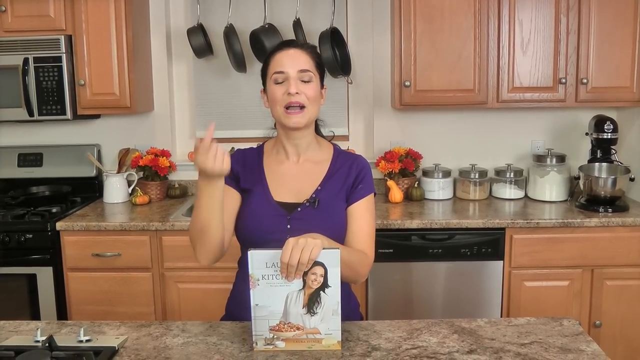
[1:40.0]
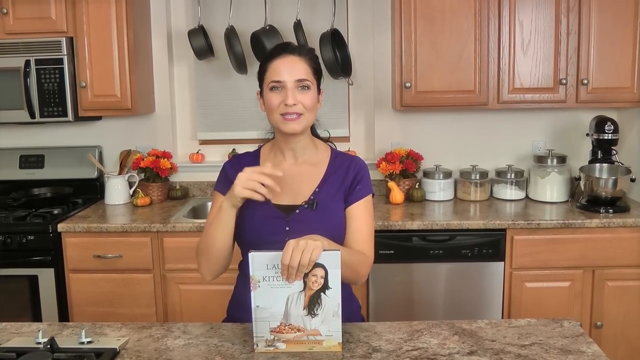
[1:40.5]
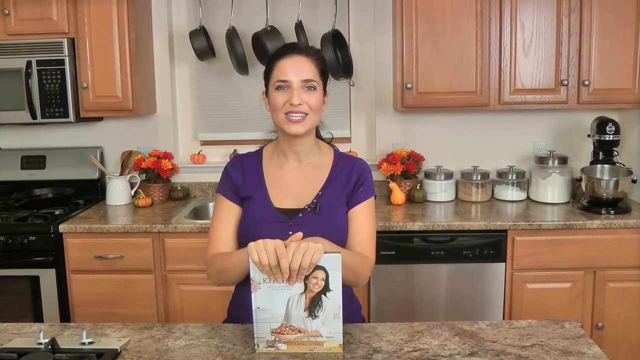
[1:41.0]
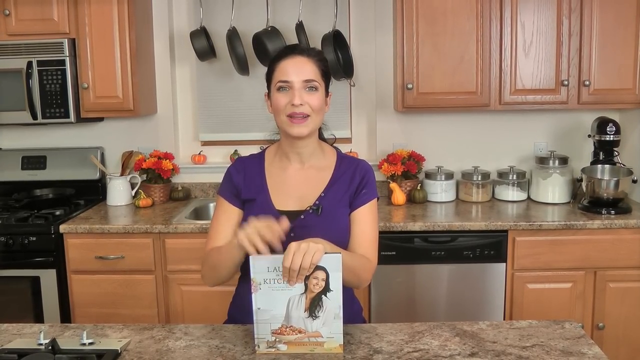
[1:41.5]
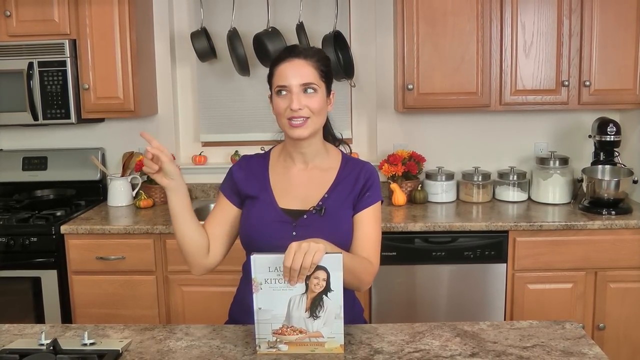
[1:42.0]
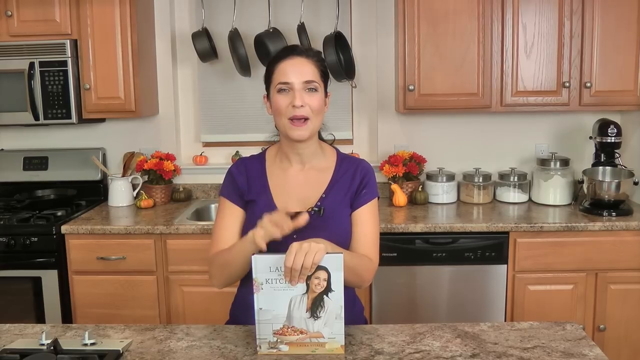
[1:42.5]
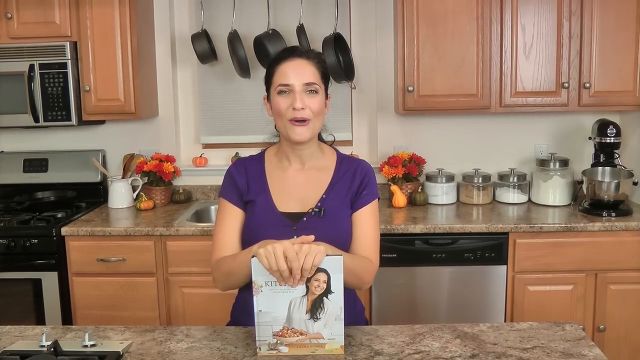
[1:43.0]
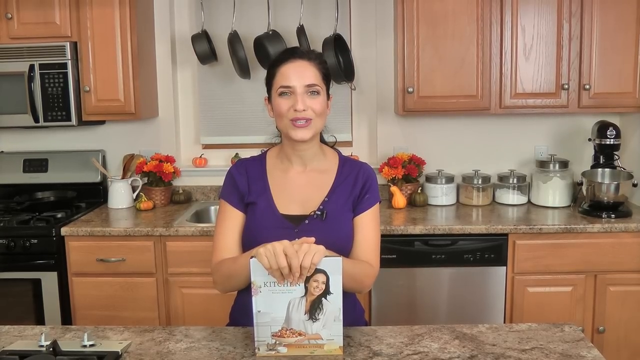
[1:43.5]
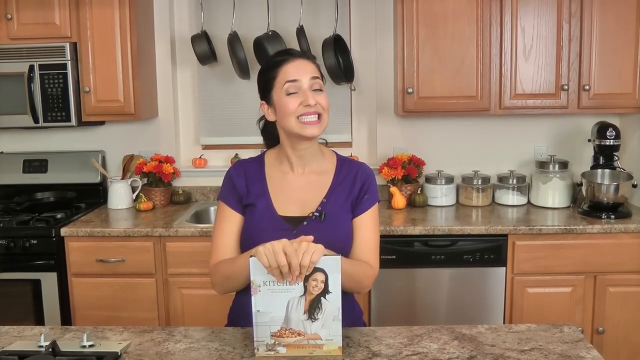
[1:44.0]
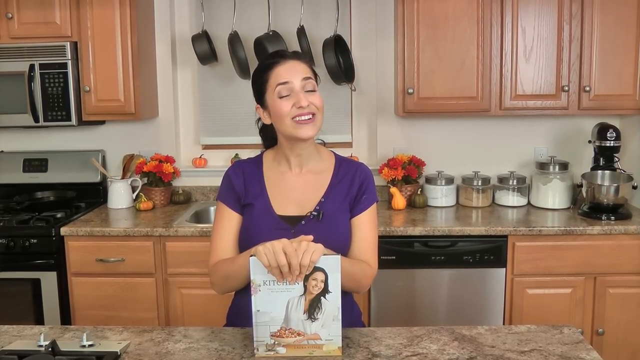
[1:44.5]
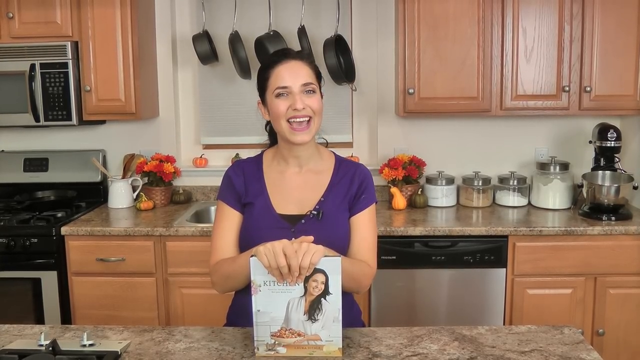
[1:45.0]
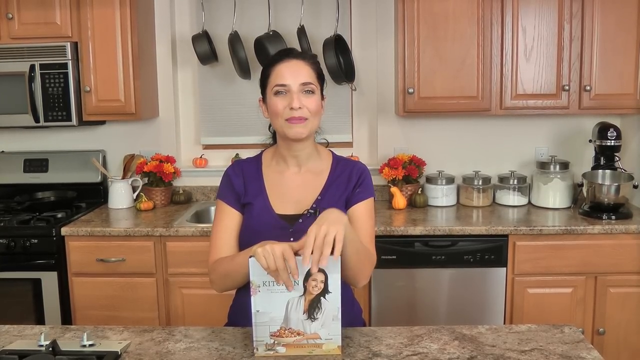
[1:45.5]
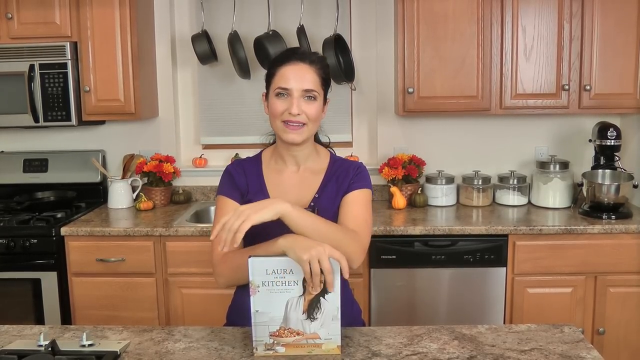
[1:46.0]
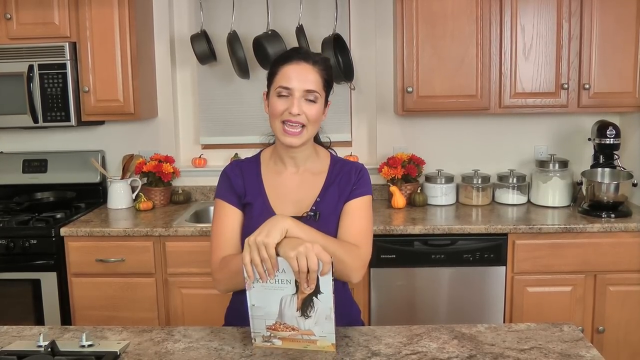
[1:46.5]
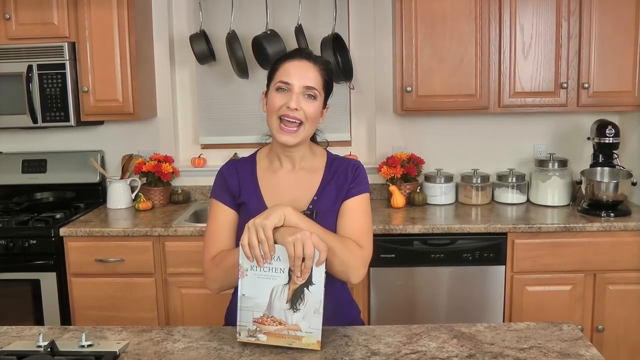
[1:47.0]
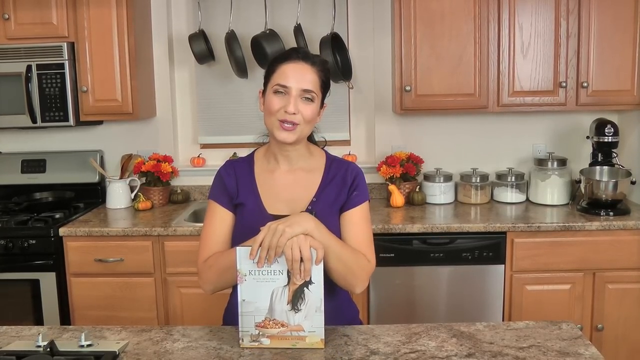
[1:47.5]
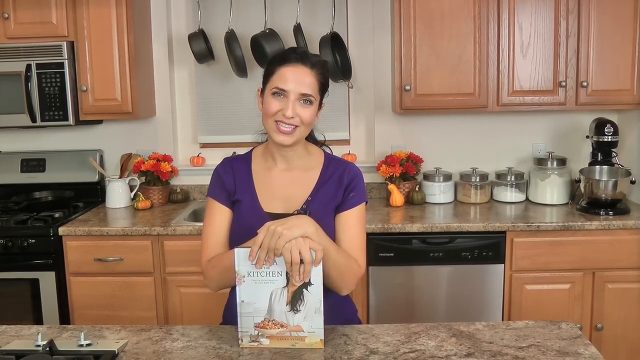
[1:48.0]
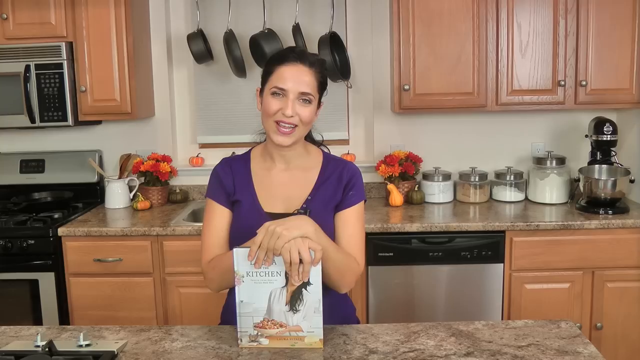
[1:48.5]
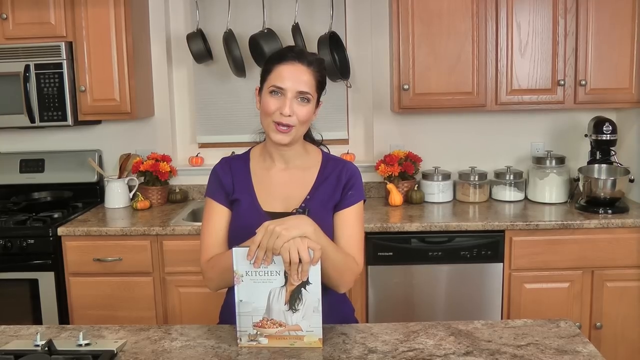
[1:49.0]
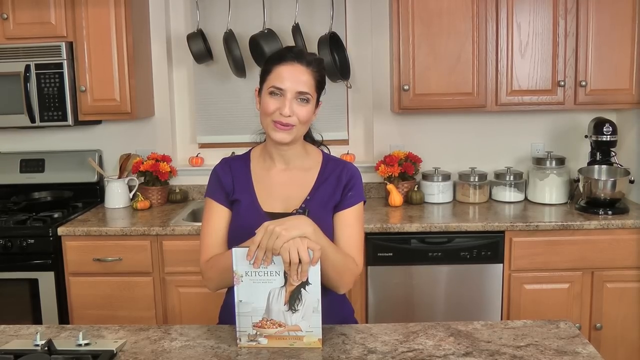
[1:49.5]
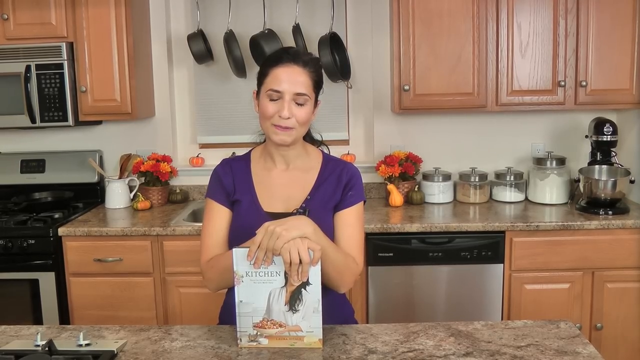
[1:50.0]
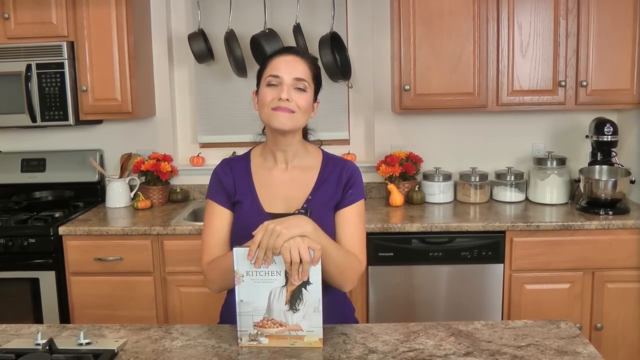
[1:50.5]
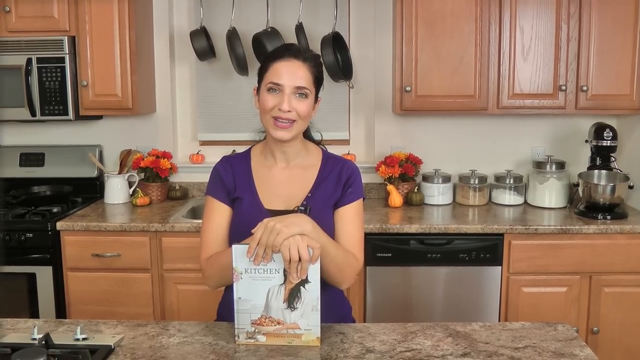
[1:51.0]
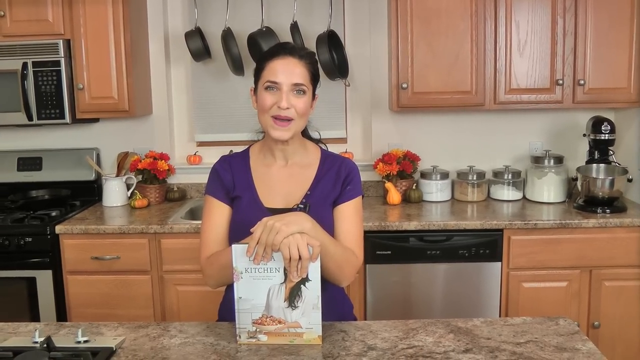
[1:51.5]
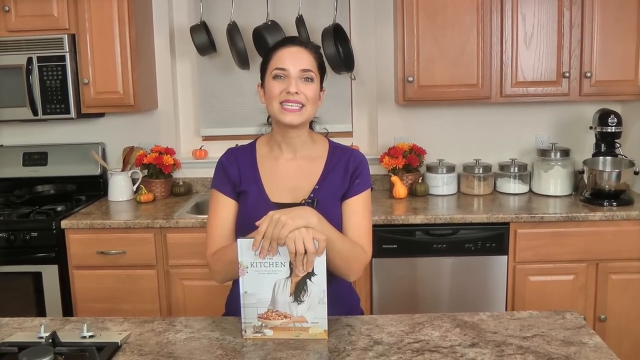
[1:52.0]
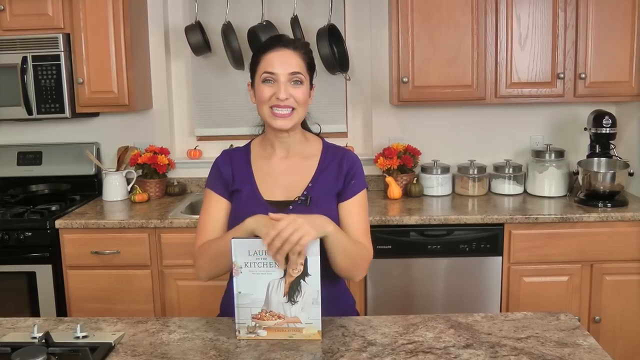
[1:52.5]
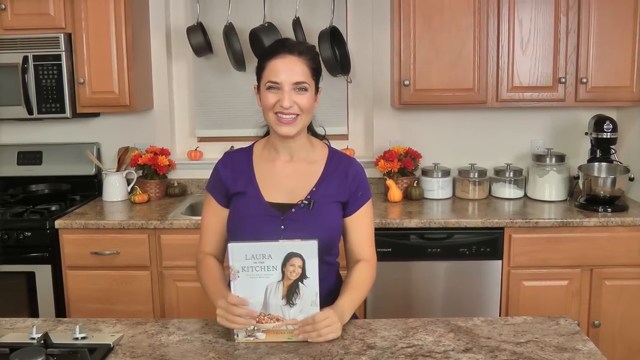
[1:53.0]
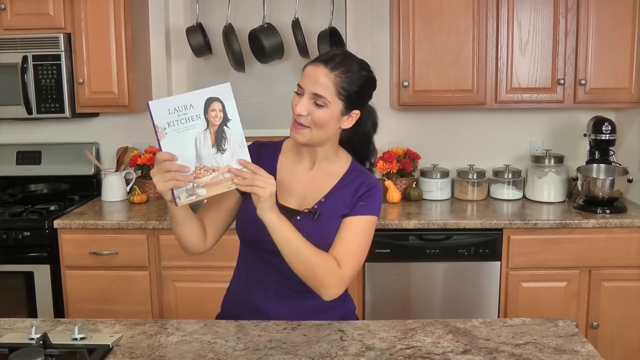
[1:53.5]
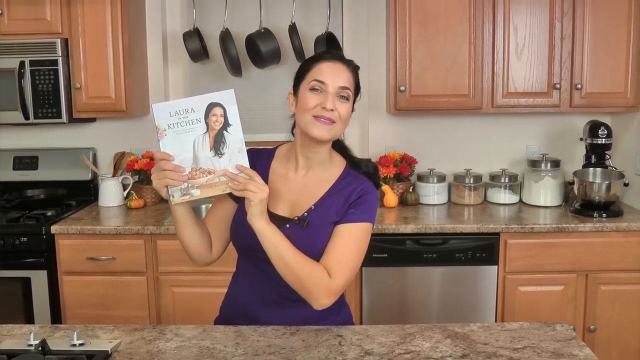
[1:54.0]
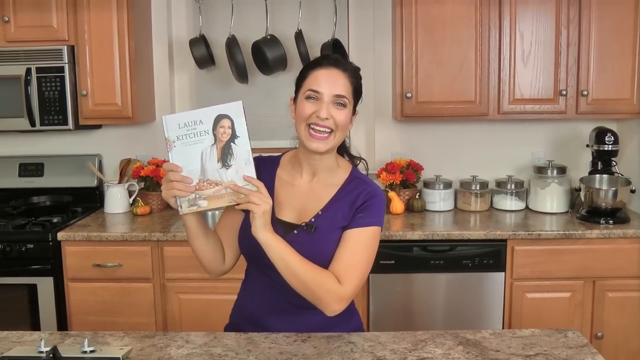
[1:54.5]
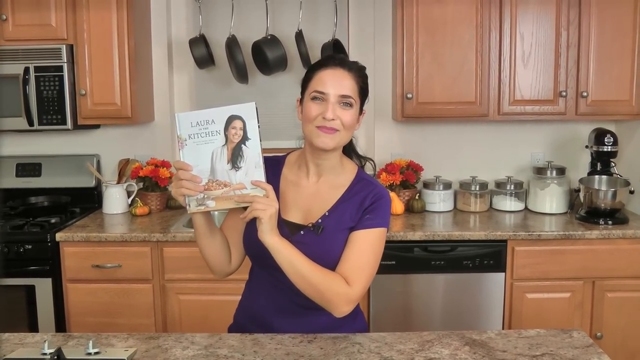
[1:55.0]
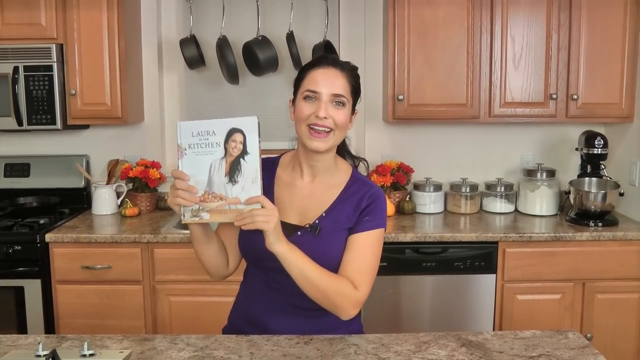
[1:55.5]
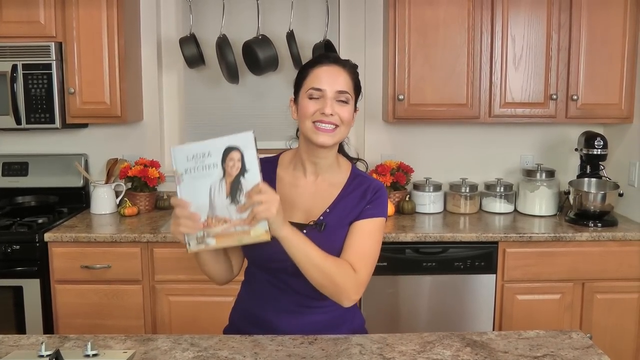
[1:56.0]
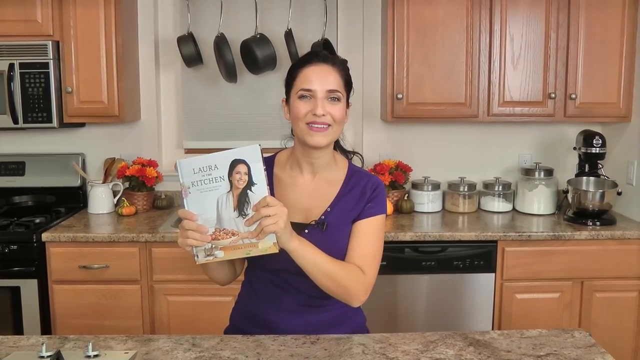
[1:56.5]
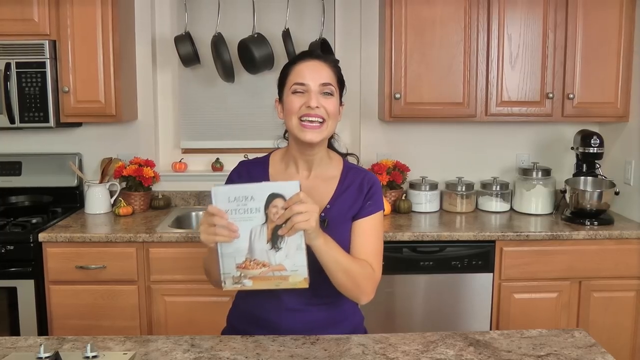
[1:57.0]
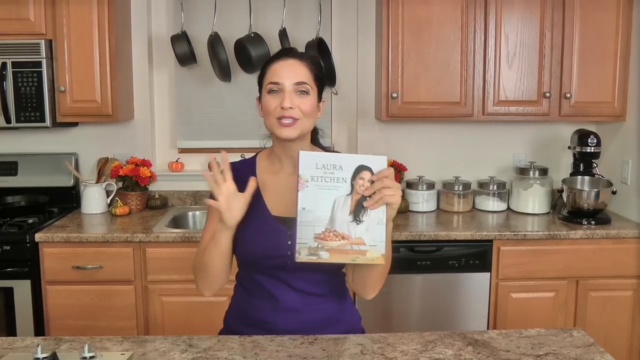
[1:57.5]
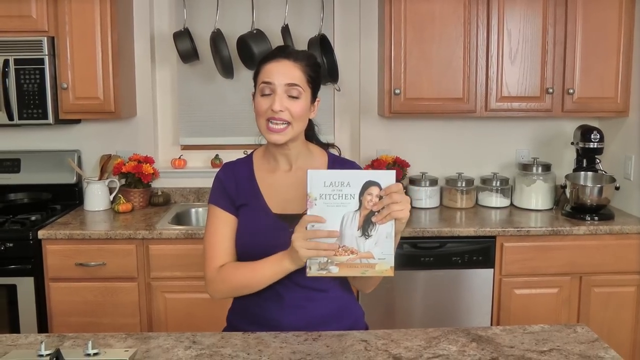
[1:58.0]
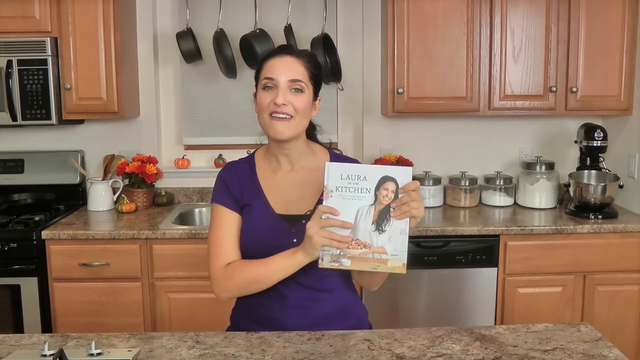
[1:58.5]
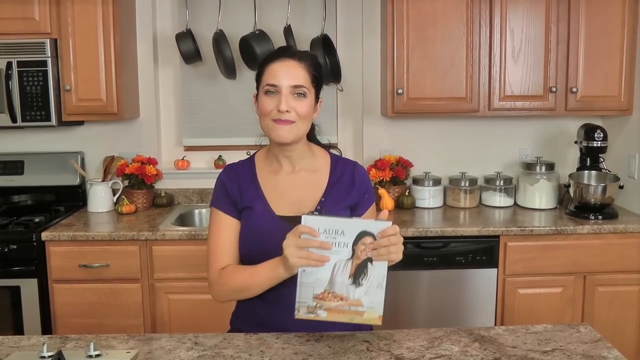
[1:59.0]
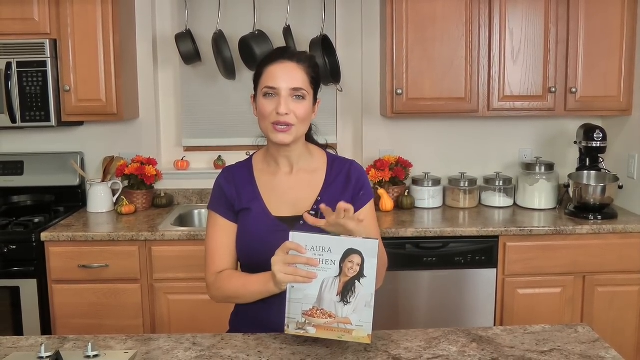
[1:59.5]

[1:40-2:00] A white woman keeps talking while facing the camera, smiling, with a book in her hand. She wears a purple top with a black collar and a small white pattern, with a microphone hanging on the top next to her chest. She picks up the book and shows its cover, which has a white woman in a white shirt with long black hair and food in front of her. The kitchen background has a stove, a microwave, a dishwasher, spices, and pans hanging on the wall next to a window. In front of her is a table with a stove, and she stands in front of it.